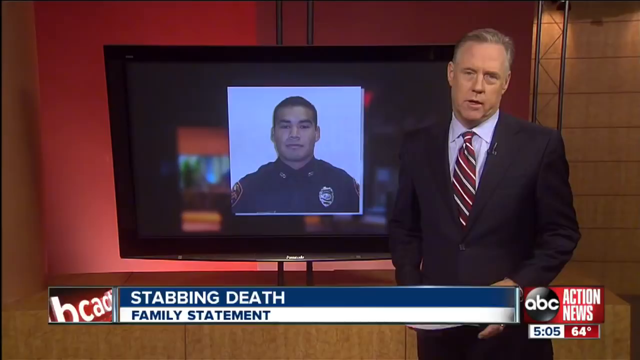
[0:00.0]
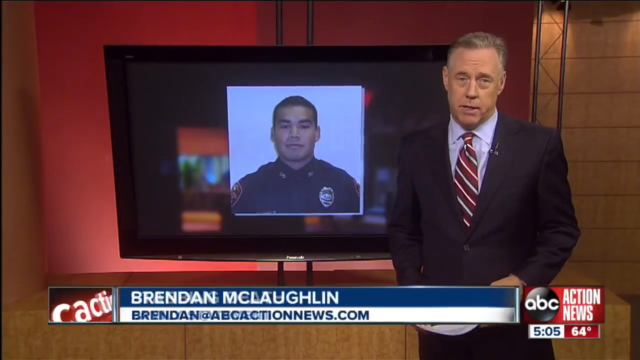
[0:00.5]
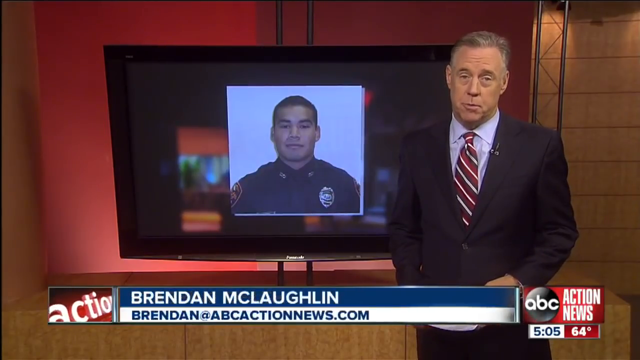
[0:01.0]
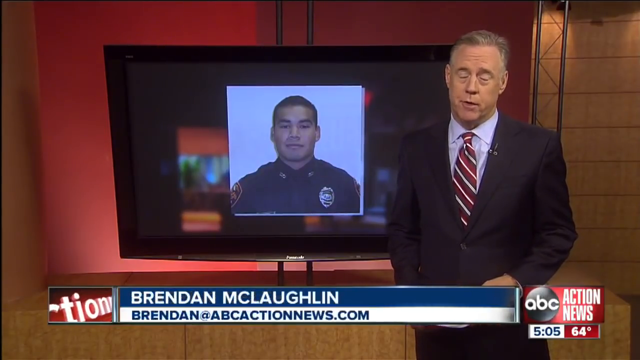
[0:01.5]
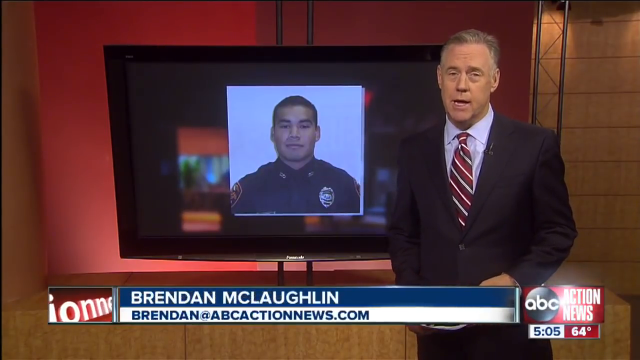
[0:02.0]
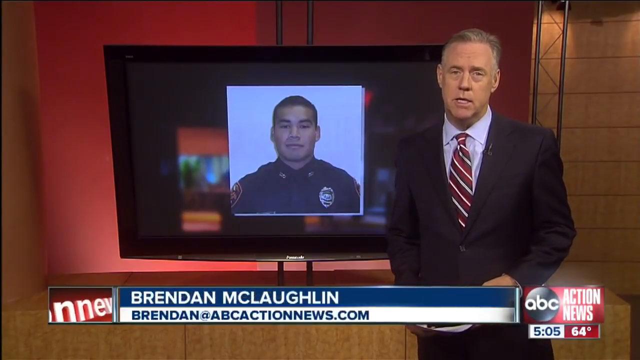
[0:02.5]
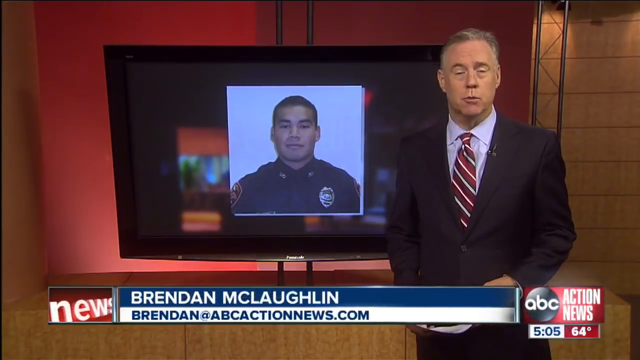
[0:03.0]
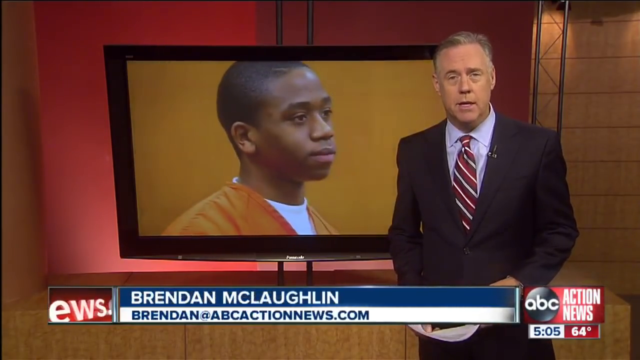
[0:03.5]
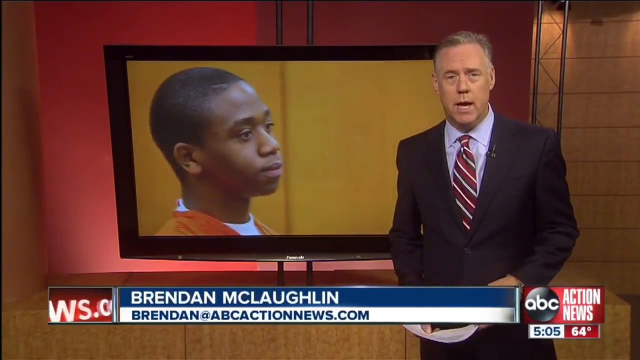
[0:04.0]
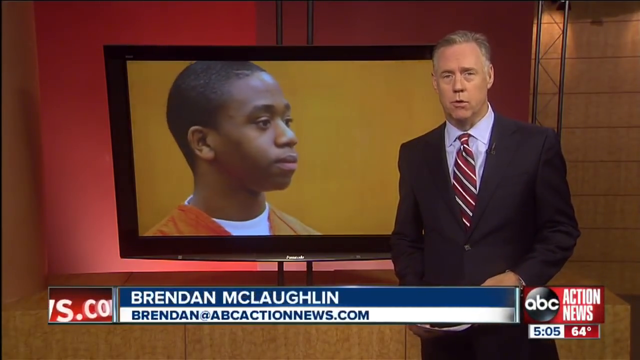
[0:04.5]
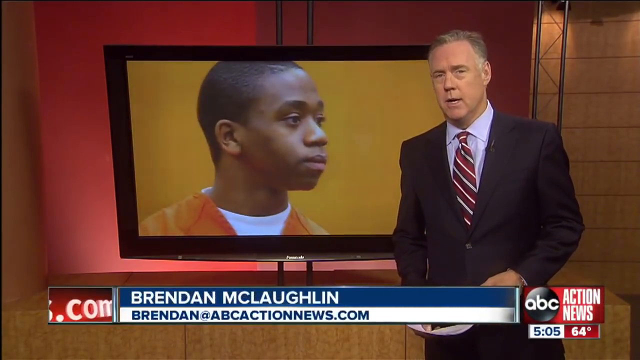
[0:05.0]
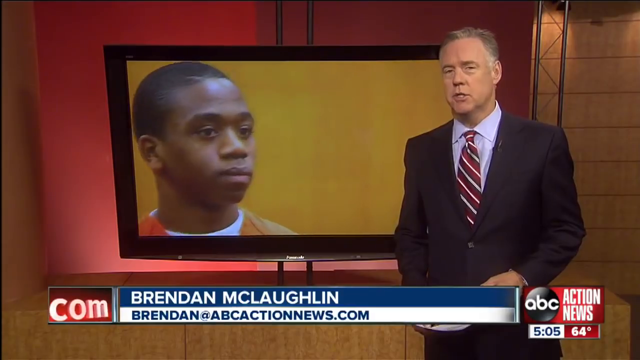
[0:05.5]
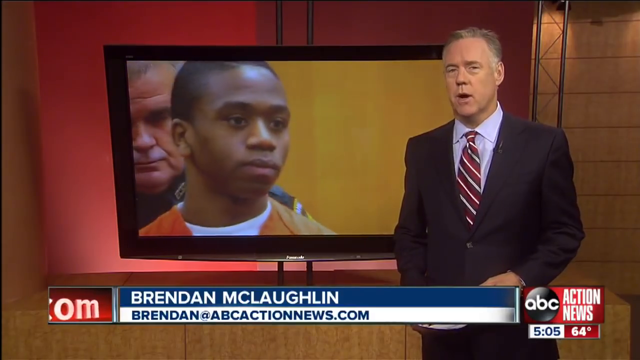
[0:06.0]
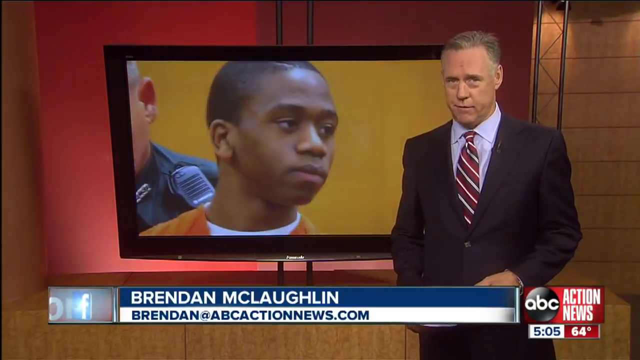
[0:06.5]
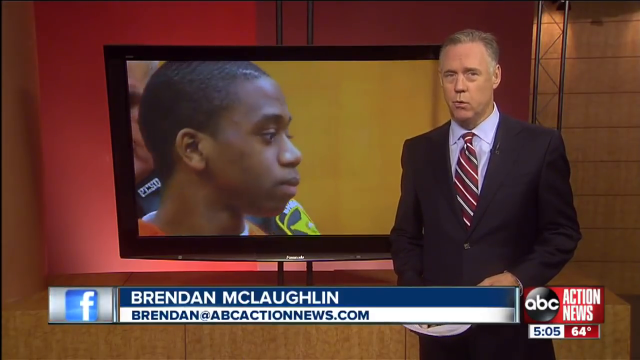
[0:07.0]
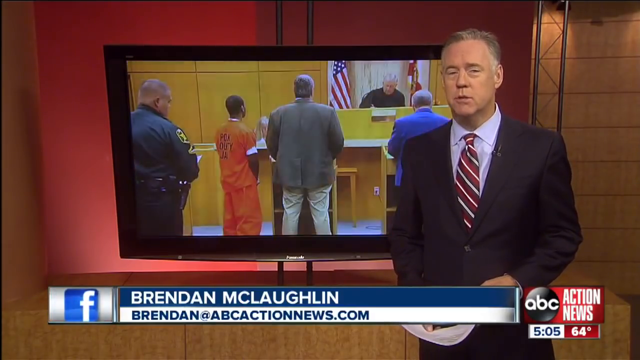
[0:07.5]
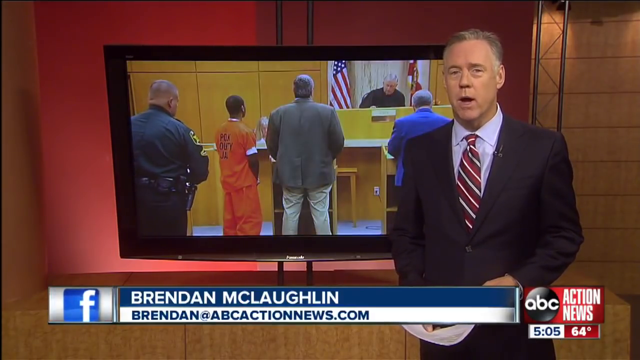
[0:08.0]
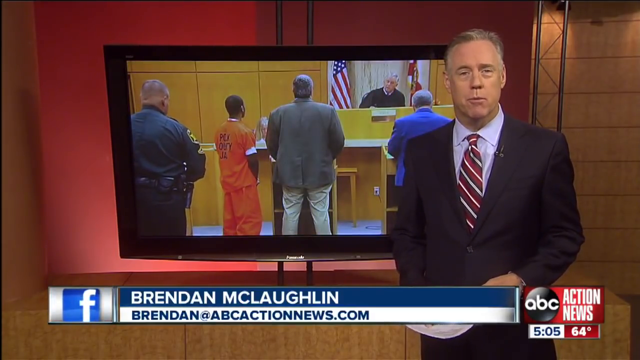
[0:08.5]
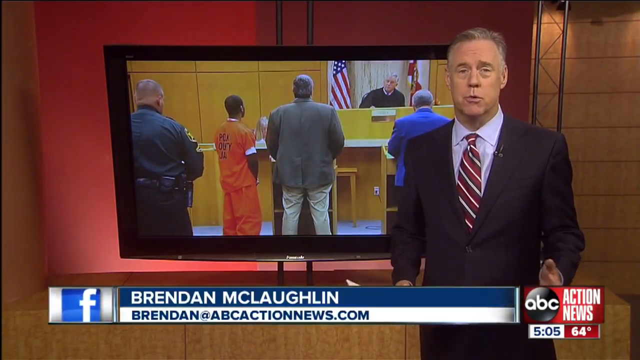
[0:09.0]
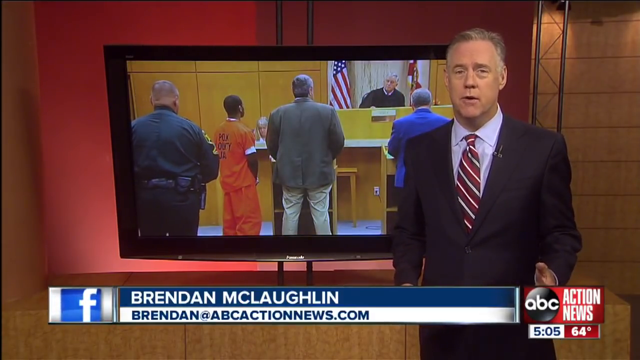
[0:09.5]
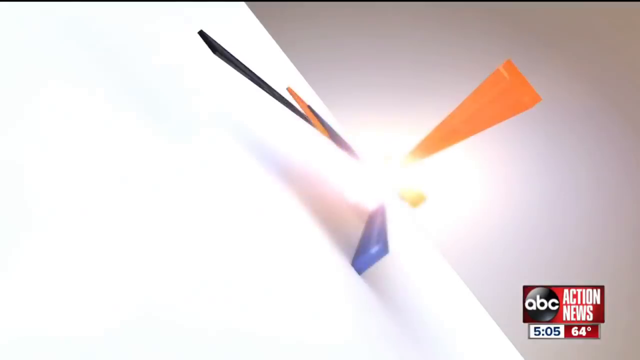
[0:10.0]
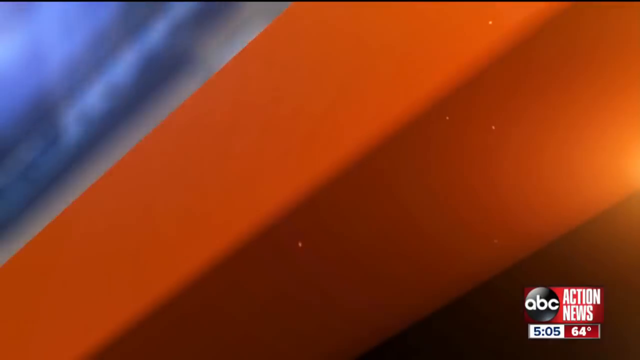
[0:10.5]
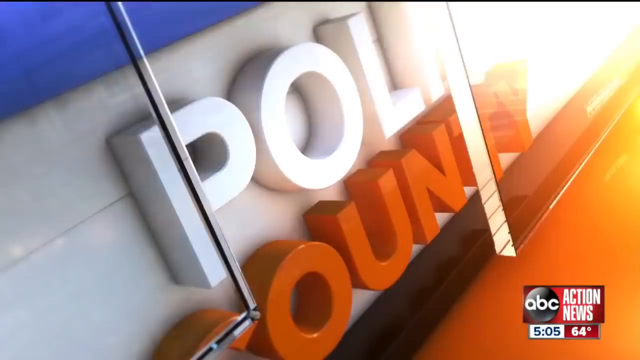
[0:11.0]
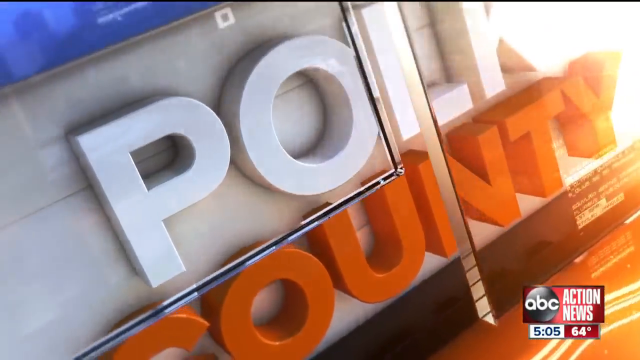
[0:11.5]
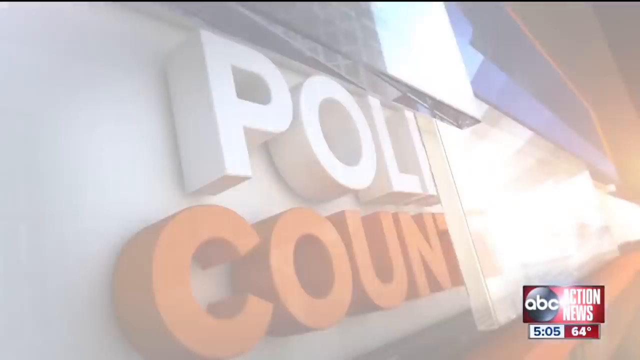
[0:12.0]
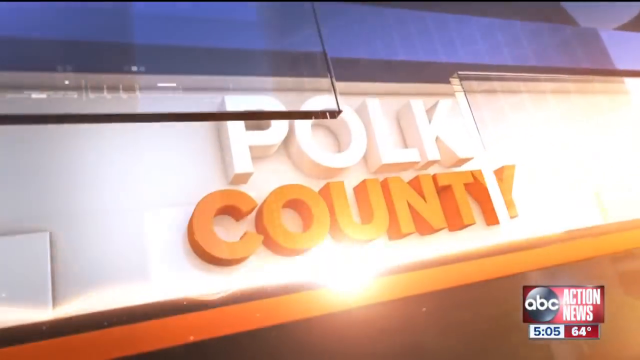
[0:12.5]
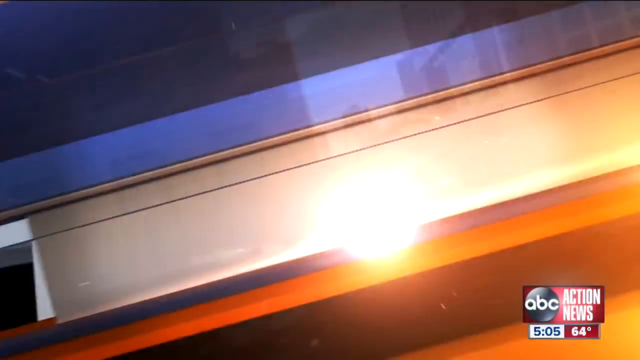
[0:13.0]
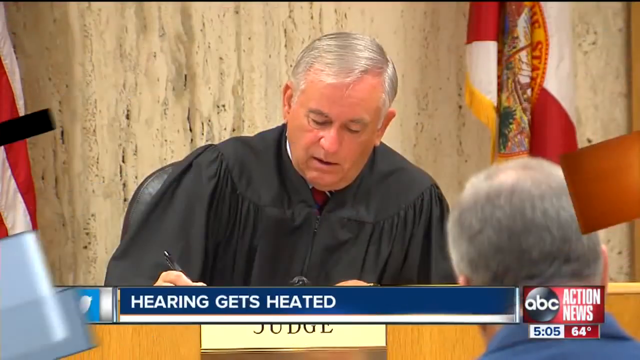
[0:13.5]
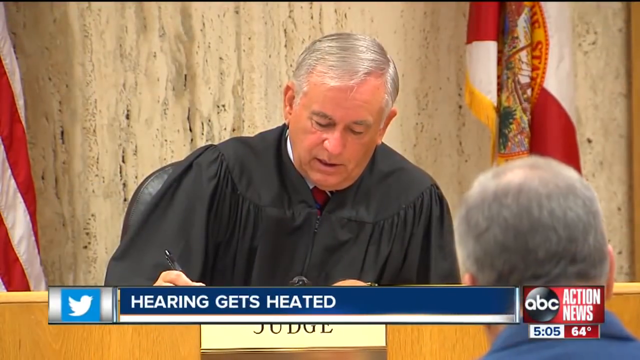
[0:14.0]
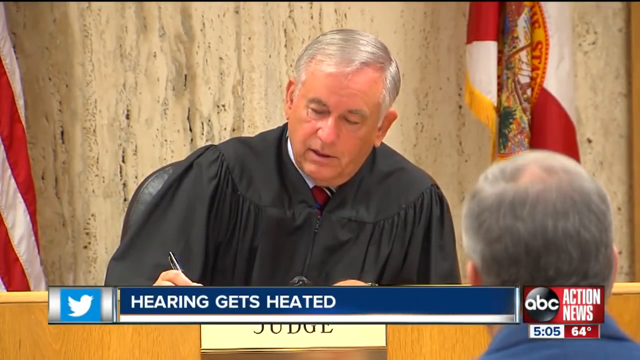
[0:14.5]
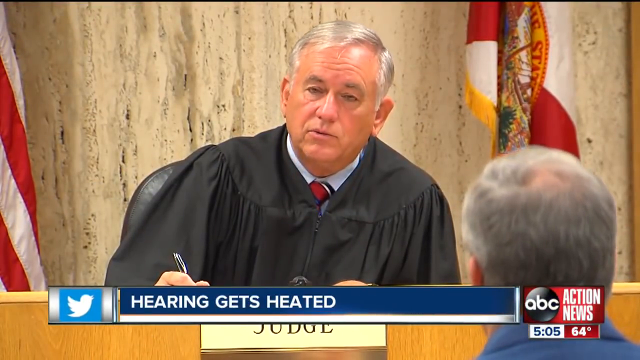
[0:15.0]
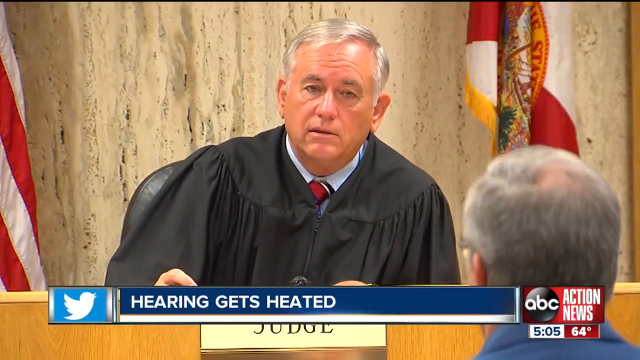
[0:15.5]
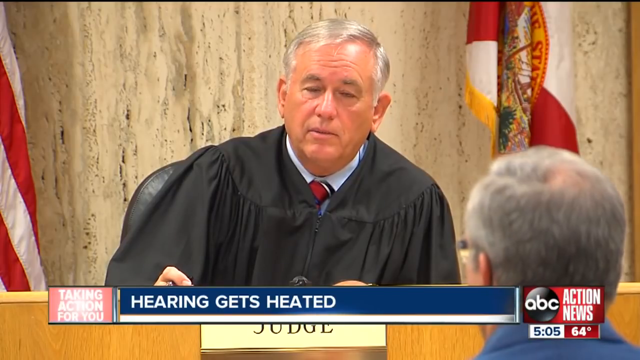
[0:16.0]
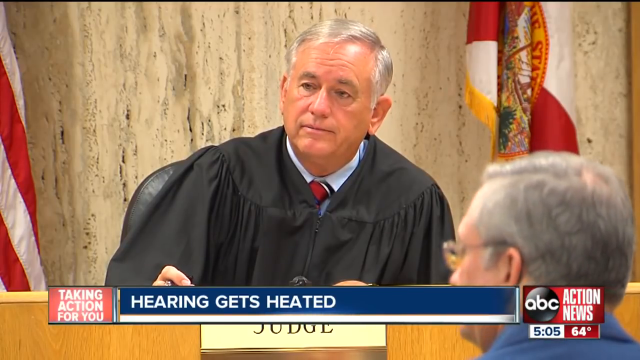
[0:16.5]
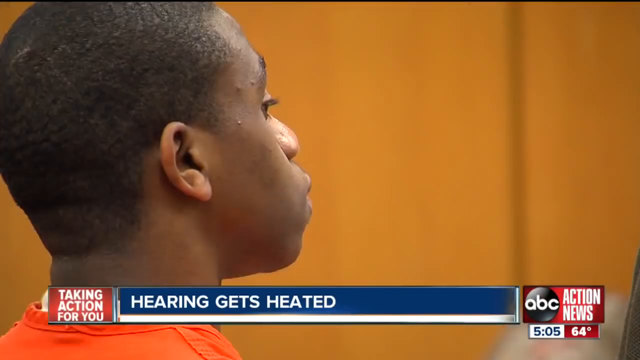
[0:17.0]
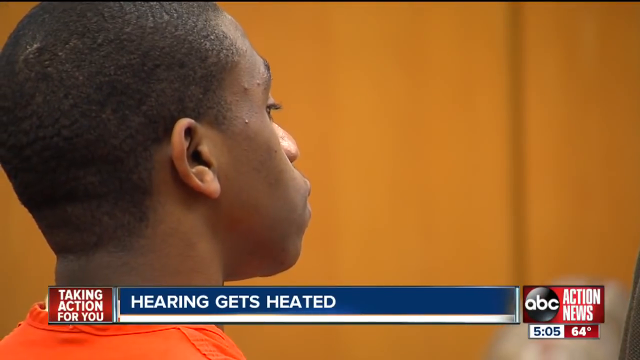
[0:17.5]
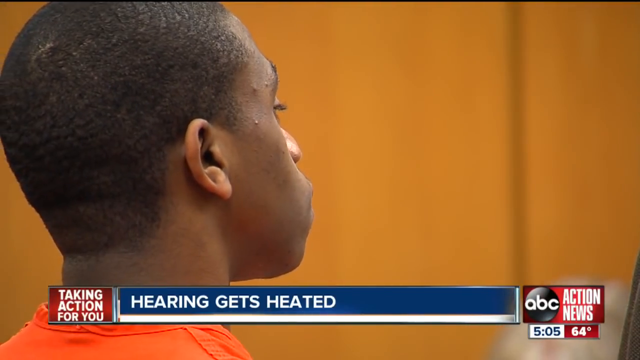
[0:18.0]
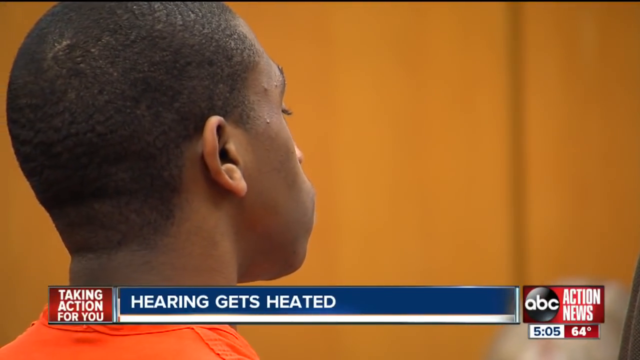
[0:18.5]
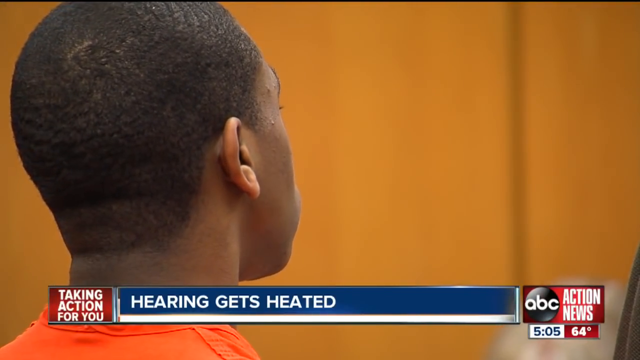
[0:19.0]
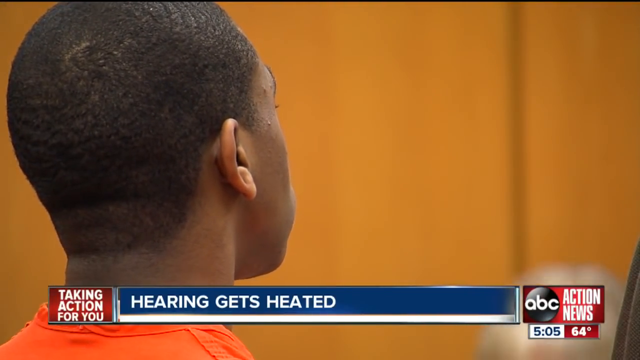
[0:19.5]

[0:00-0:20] The video opens at a TV station with a typical news set. There is wood paneling in the background, and behind the paneling is a red window with a TV inside it. The TV shows a story featuring a picture of a police officer, who looks very tan, apparently Mexican. In front of the TV is a news anchor, a white man with short hair, wearing a black suit with a red and white striped tie over a blue long-sleeve shirt. At the bottom of the screen his name appears as "Brendan McLaughlin"; he is presenting for ABC News. A marker at the bottom shows the time as 5:05 and the temperature as 64 degrees. The video then transitions to a graphic that says "Polk County," followed by a courtroom. Two flags are in the back of the courtroom: an American flag on the left and some kind of state flag on the right. In front of the flags is the judge, a white man with short gray-white hair in a normal black suit, holding a pen.